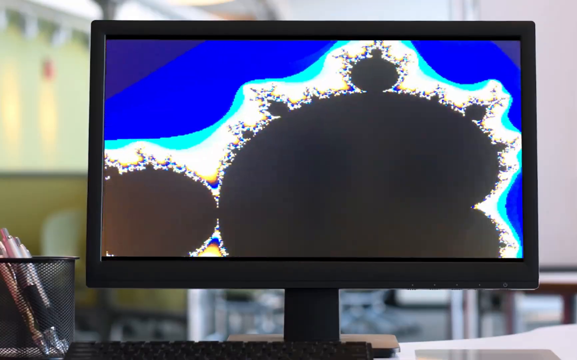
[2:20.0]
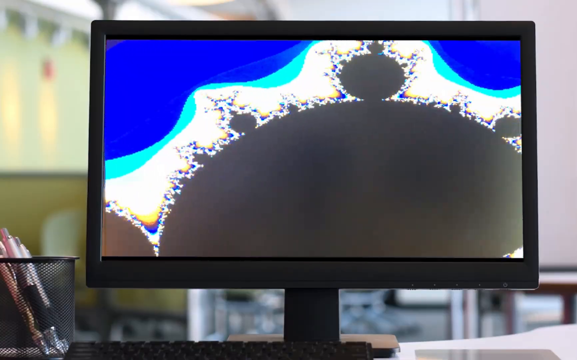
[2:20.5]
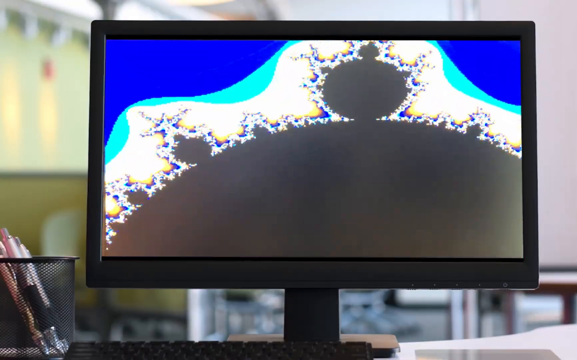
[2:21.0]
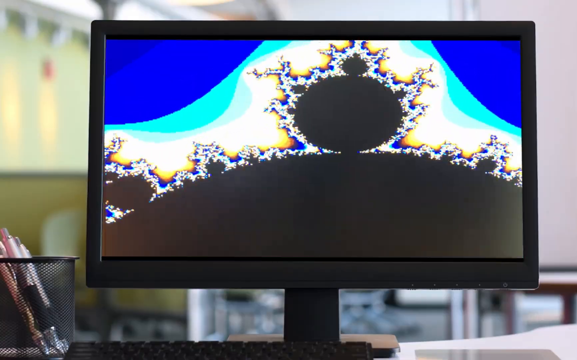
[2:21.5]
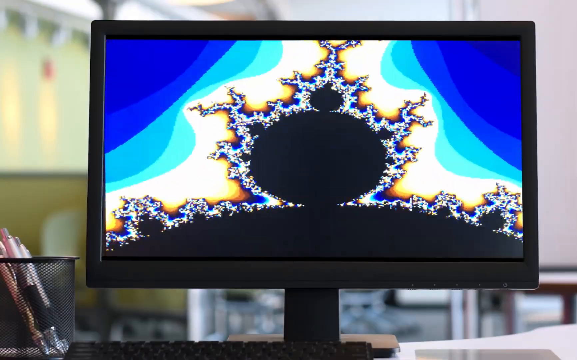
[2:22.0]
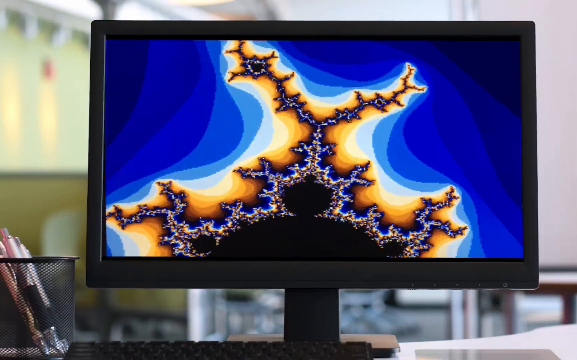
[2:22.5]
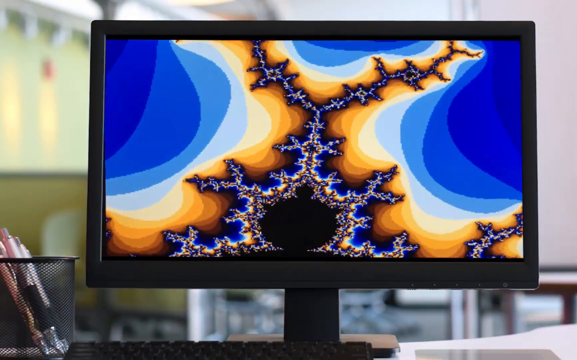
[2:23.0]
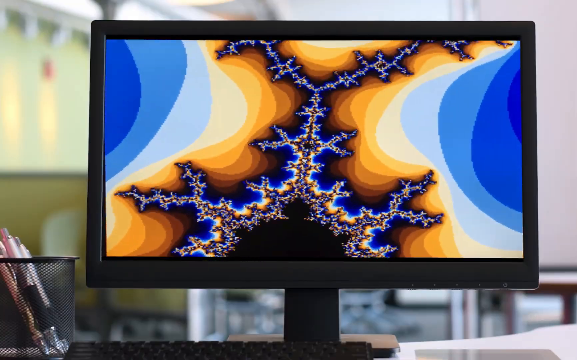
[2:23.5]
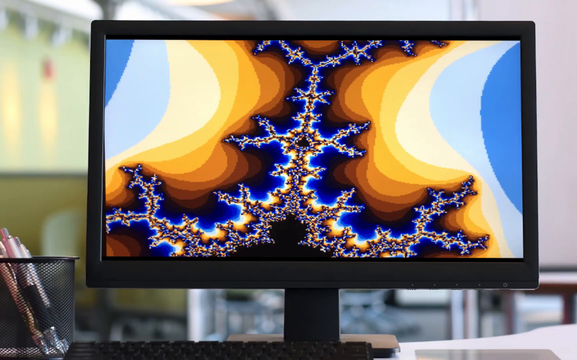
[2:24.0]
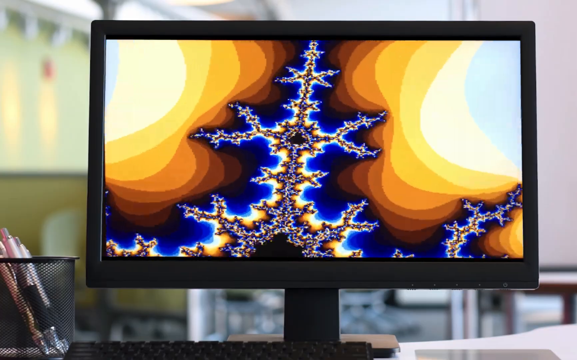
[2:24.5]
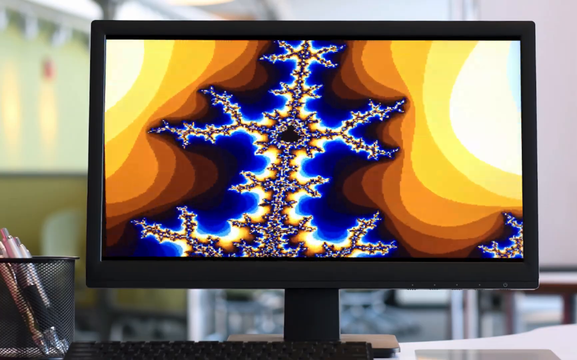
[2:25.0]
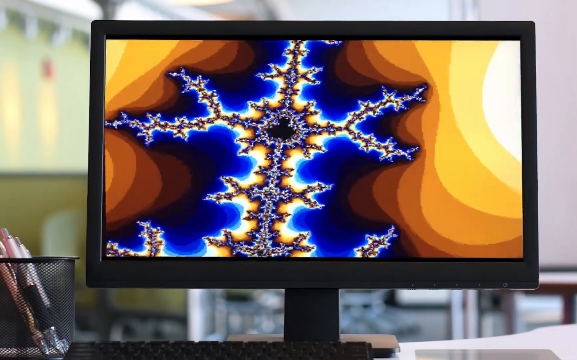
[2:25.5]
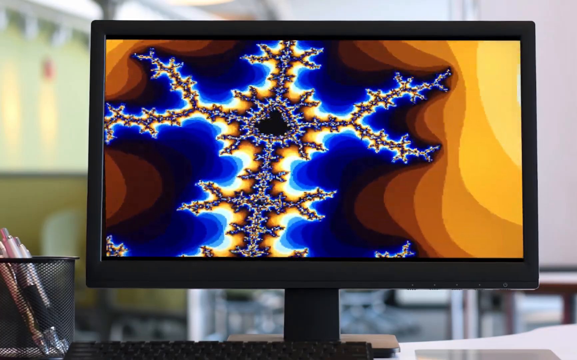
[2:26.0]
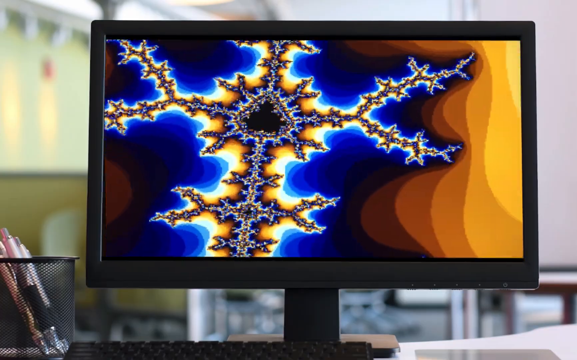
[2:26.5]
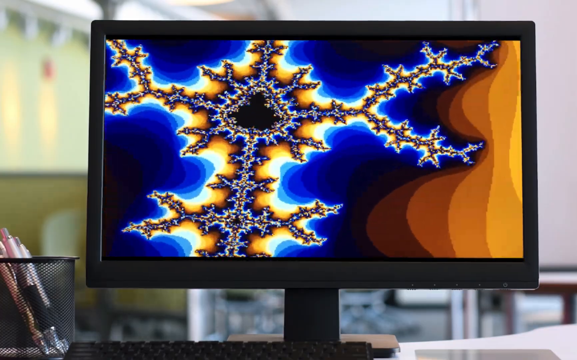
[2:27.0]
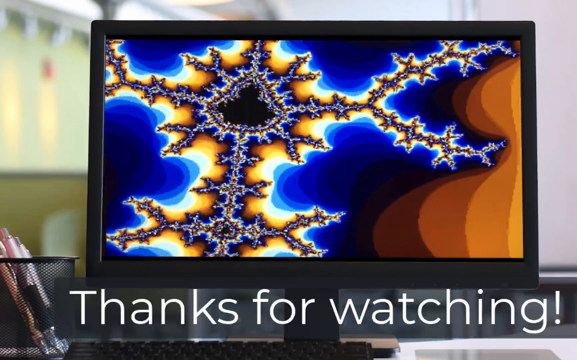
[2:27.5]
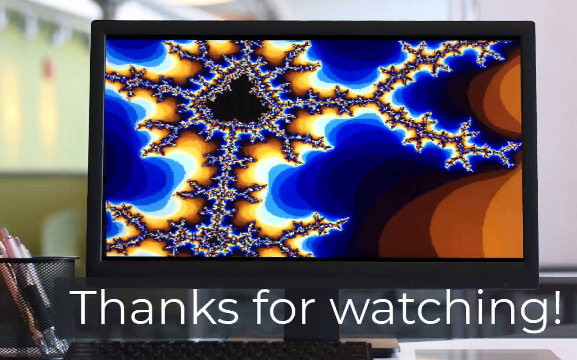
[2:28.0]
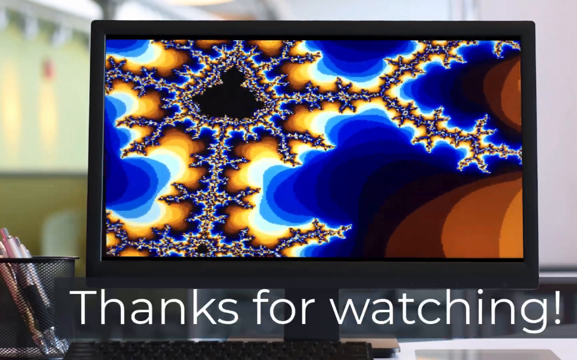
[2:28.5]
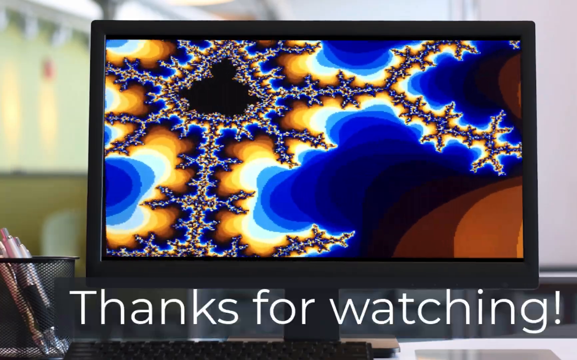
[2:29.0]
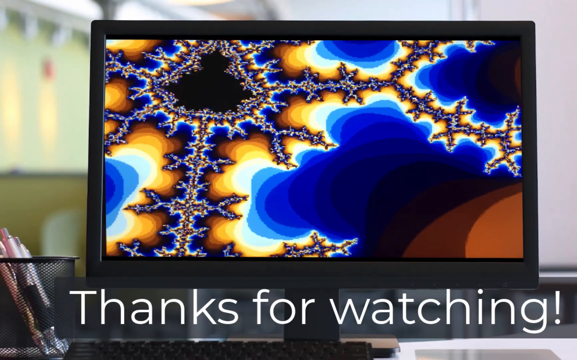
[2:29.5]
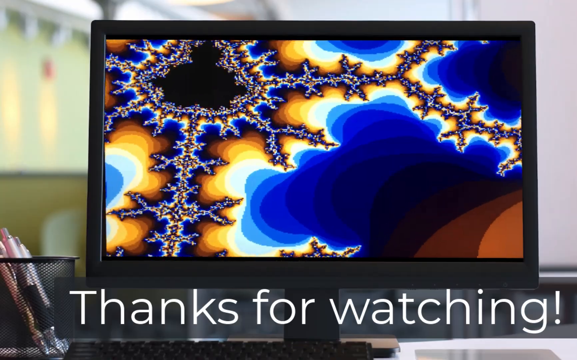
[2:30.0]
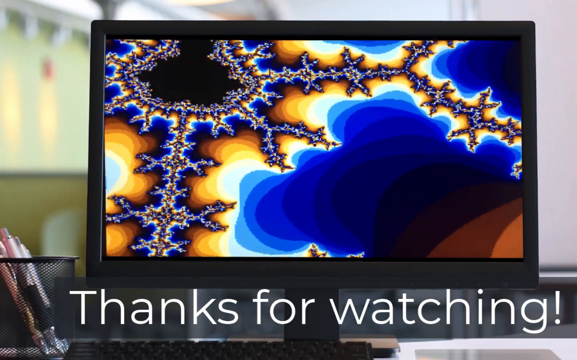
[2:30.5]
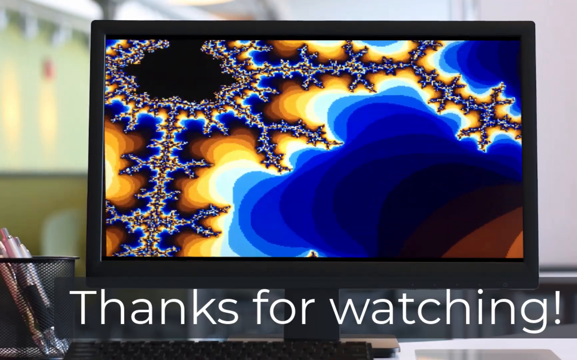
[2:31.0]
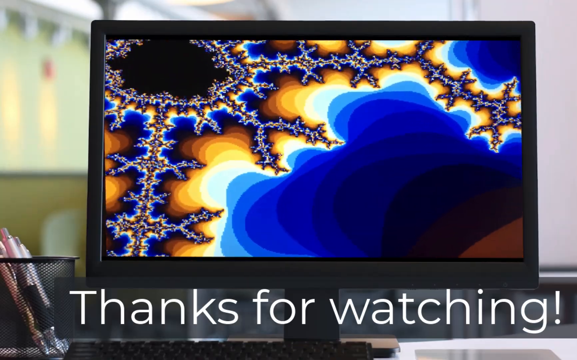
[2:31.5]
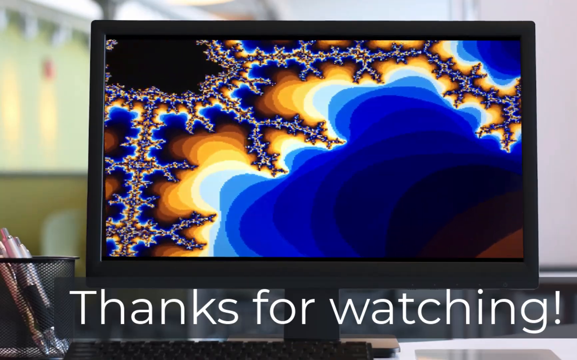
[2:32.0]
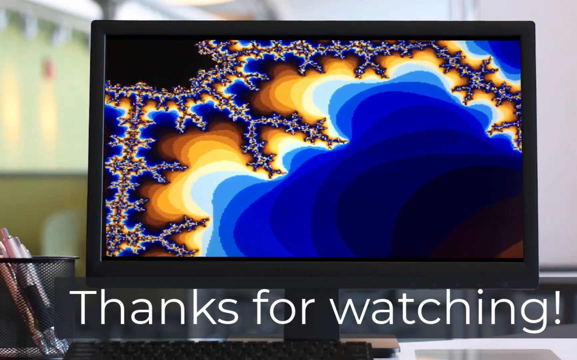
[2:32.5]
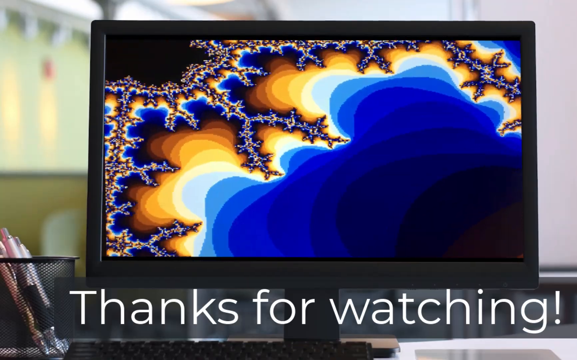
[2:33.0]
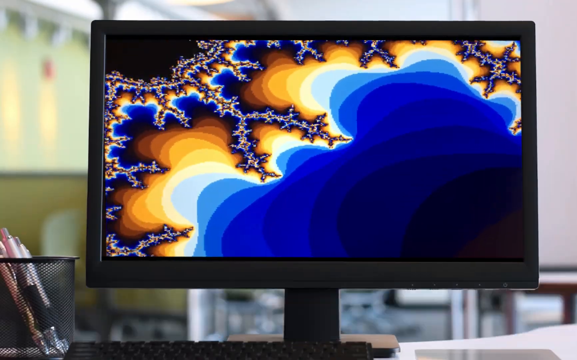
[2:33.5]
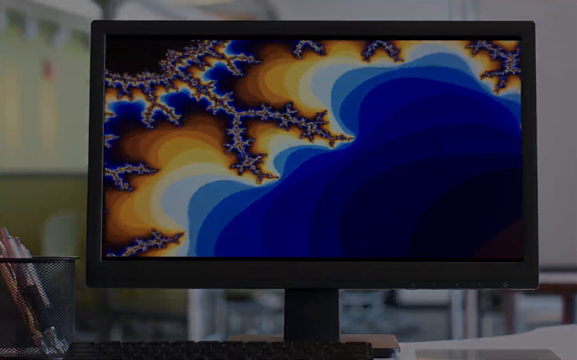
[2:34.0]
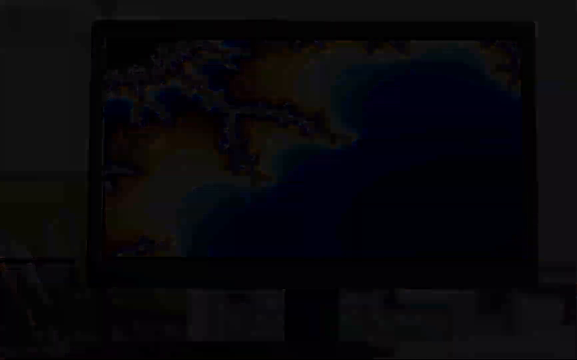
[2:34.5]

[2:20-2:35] An office space is shown with a desk, a mesh cup holding at least three writing pens, and a computer monitor. On the monitor is what looks like a life form under a microscope, though it does not look real; it looks drawn. The camera pans close: the outer part is blue, and moving inward it becomes a lighter blue that transitions to a pale yellow, then to a mix of blue and white, and the center is black. The camera pans very close, revealing shades of amber within the pale yellow section. At the bottom of the screen, "Thanks for watching!" appears.